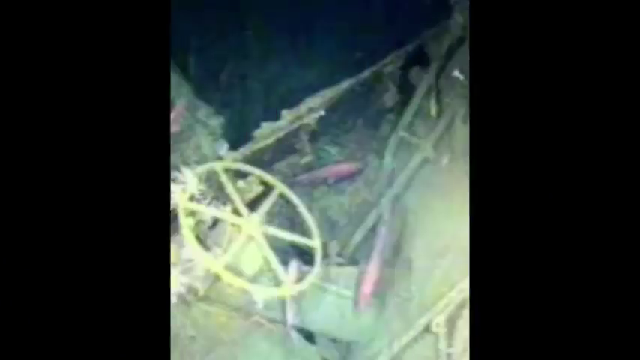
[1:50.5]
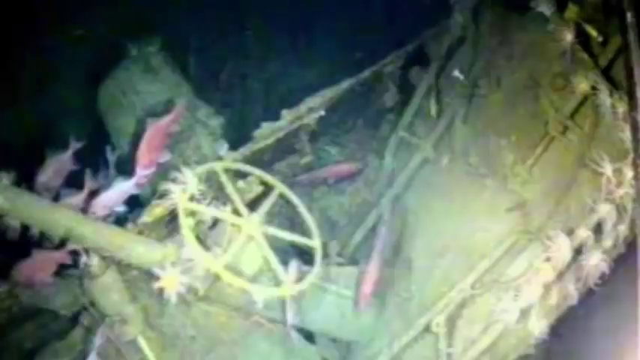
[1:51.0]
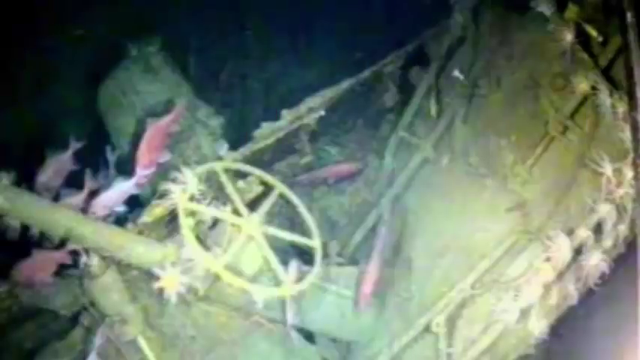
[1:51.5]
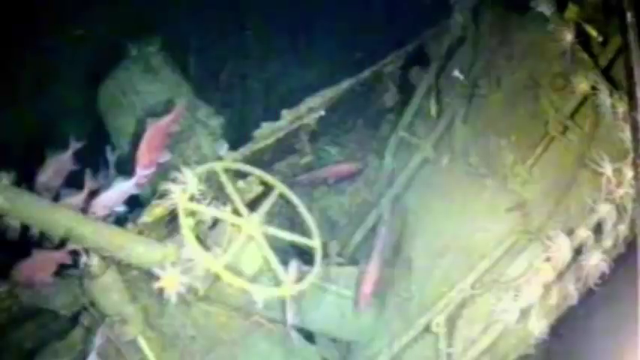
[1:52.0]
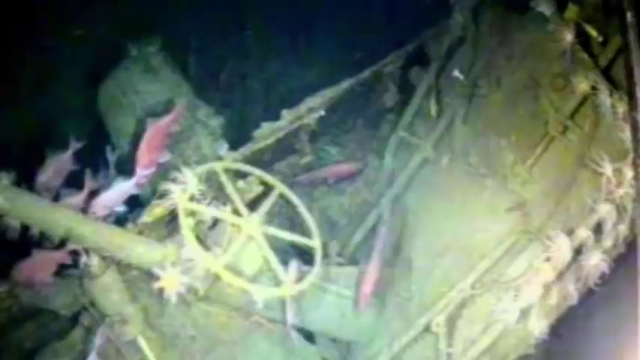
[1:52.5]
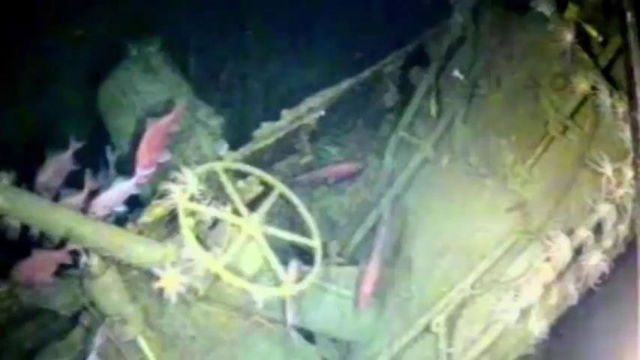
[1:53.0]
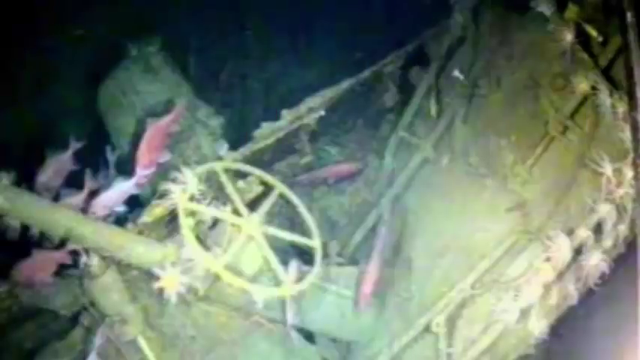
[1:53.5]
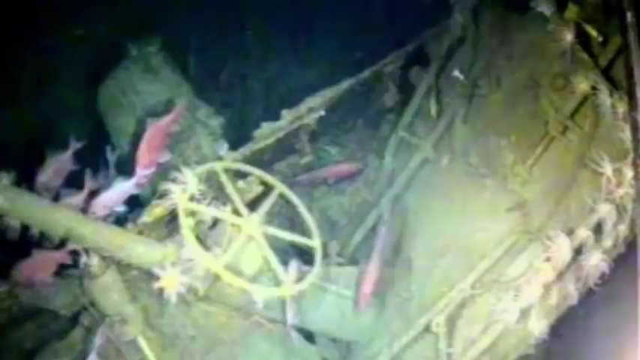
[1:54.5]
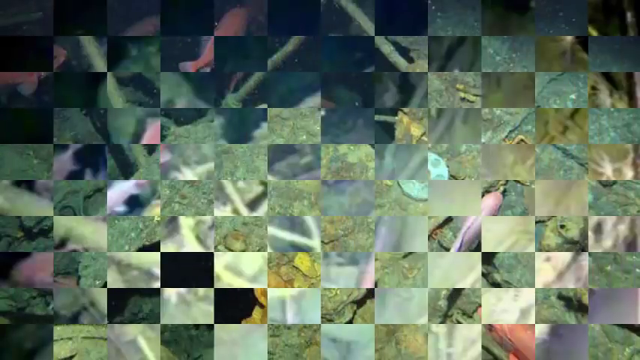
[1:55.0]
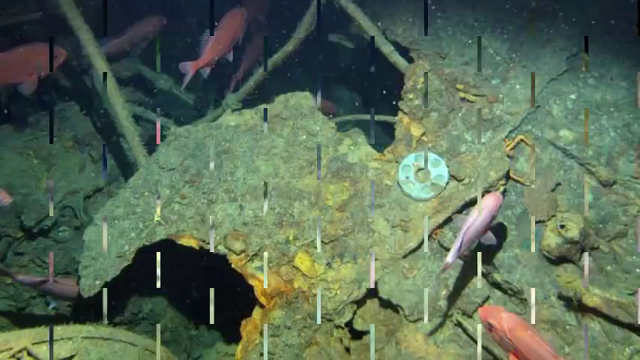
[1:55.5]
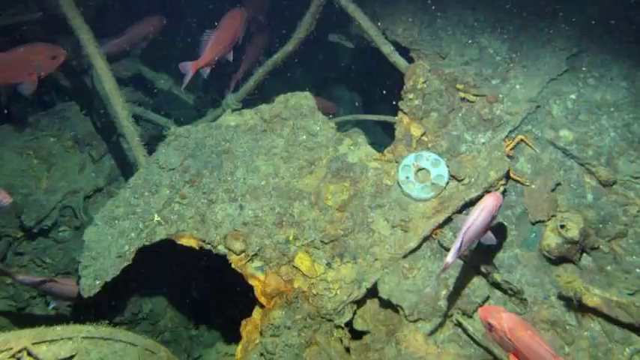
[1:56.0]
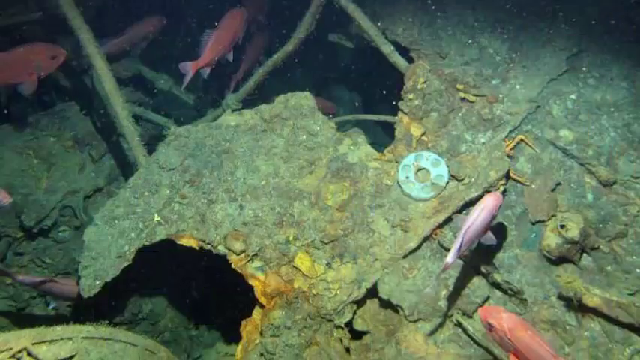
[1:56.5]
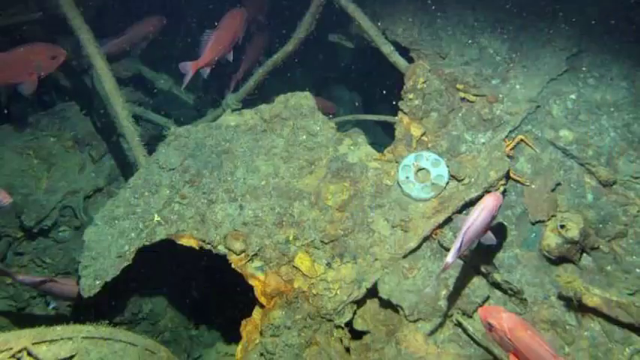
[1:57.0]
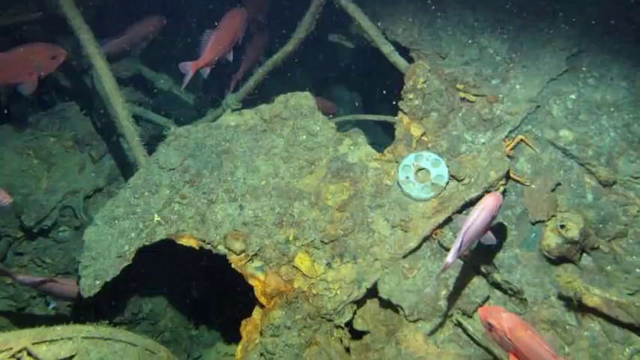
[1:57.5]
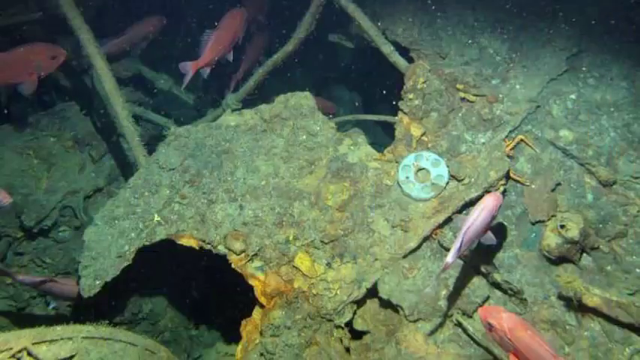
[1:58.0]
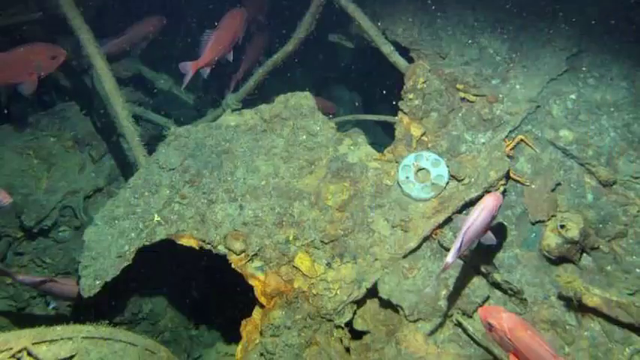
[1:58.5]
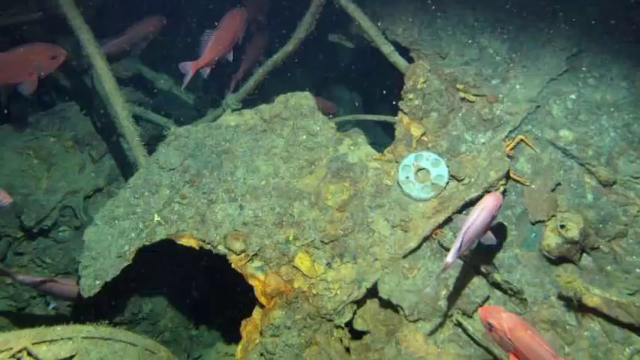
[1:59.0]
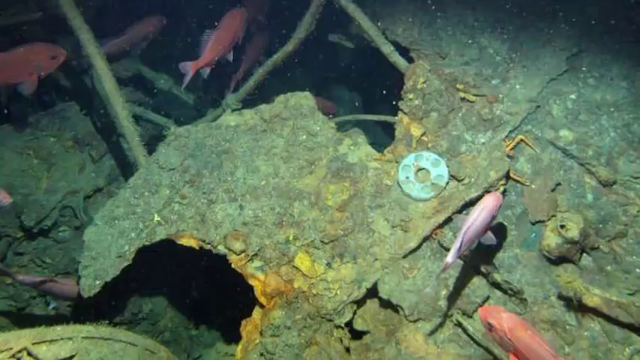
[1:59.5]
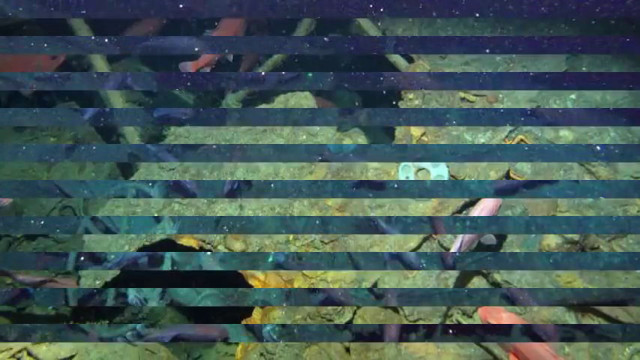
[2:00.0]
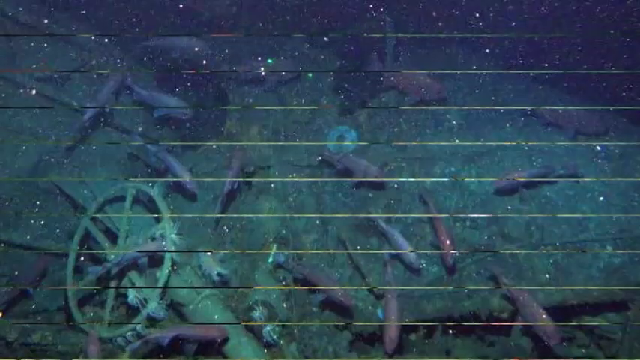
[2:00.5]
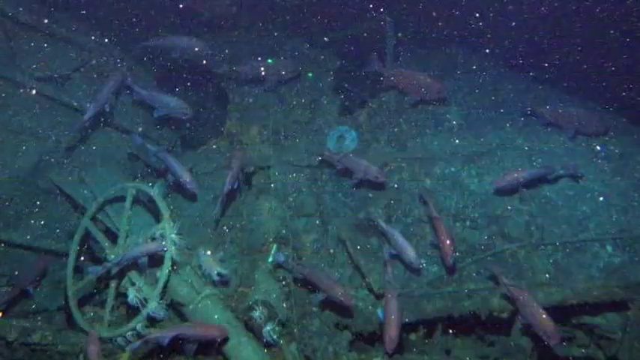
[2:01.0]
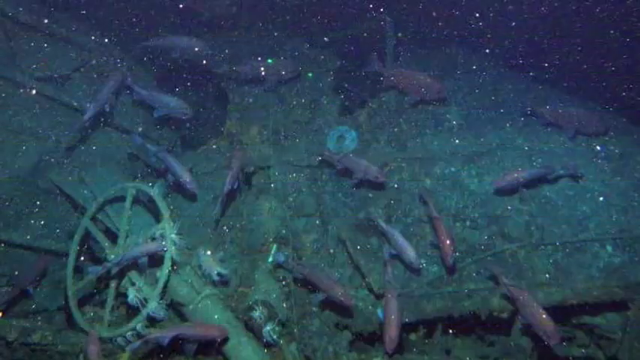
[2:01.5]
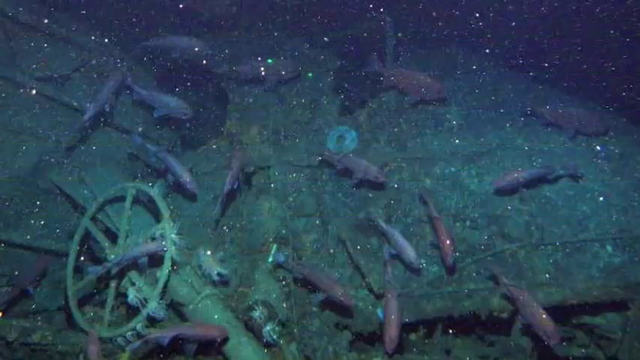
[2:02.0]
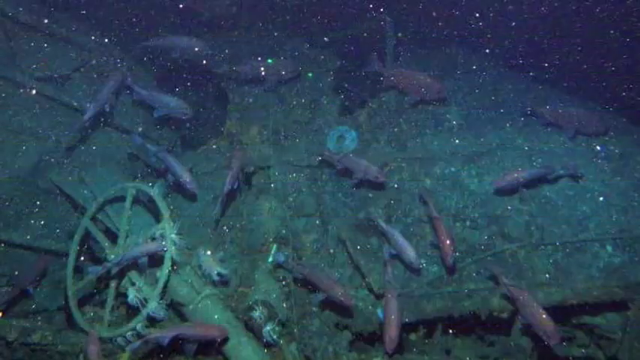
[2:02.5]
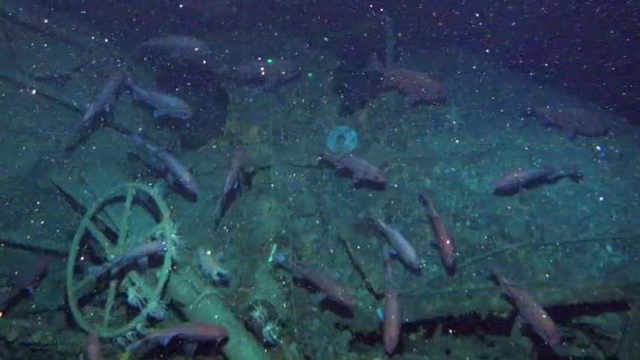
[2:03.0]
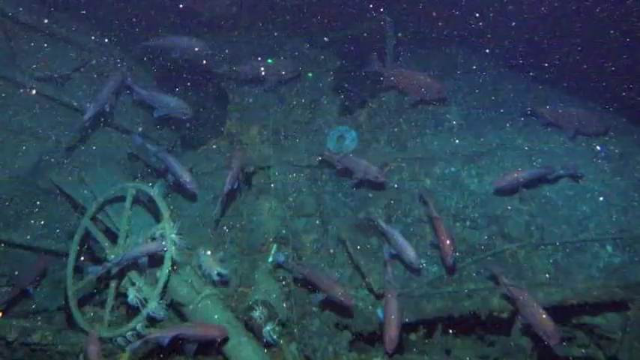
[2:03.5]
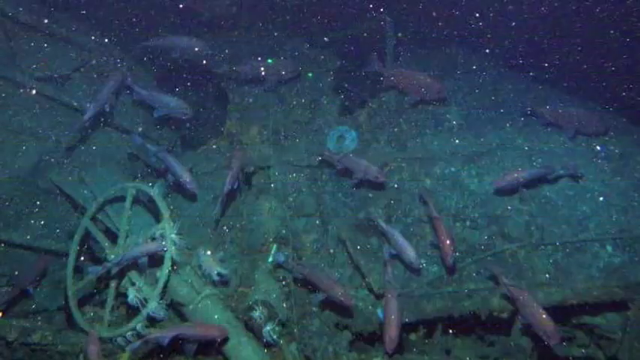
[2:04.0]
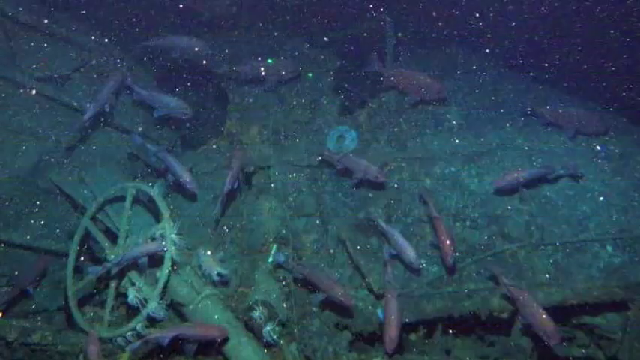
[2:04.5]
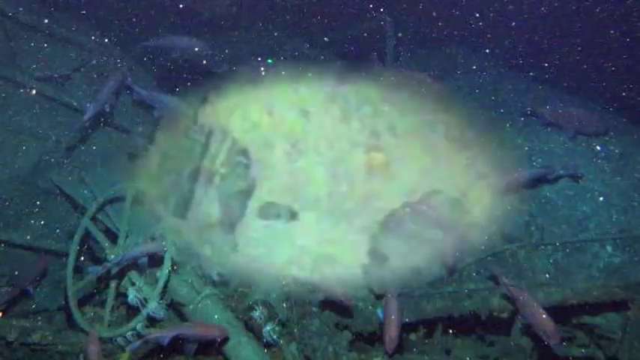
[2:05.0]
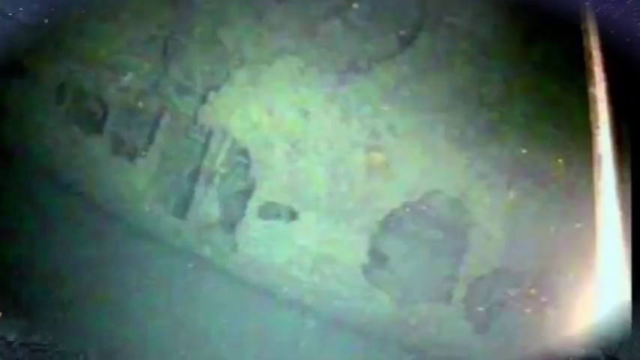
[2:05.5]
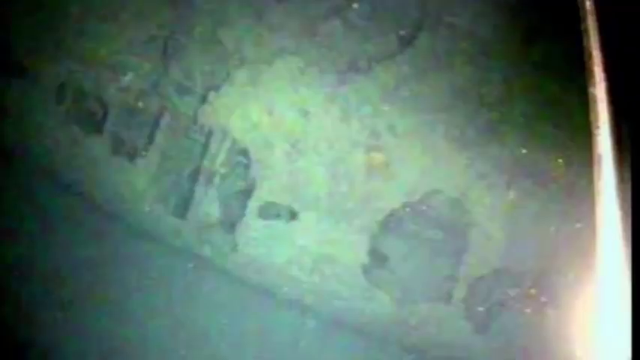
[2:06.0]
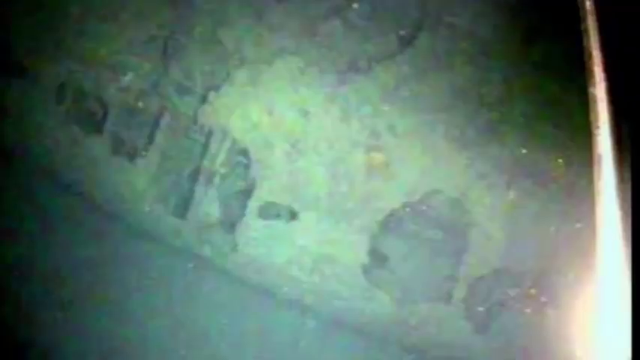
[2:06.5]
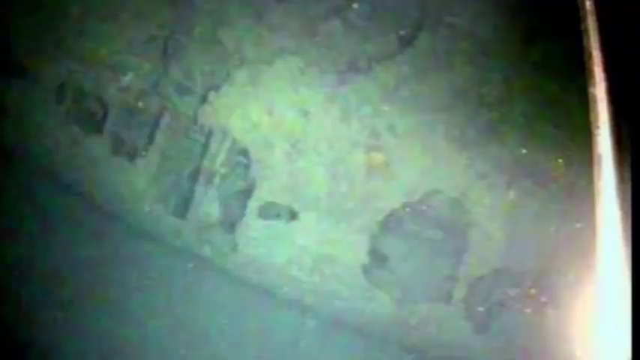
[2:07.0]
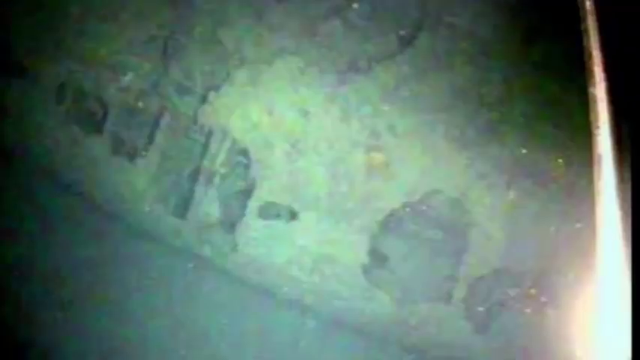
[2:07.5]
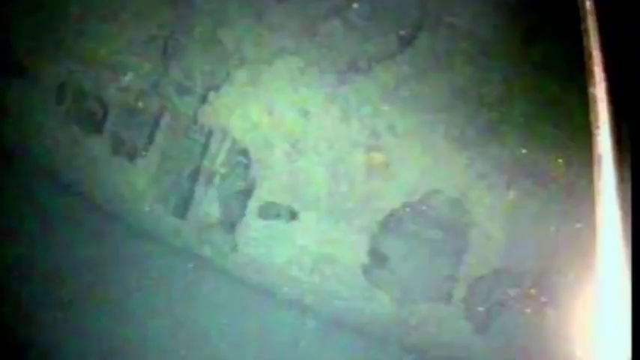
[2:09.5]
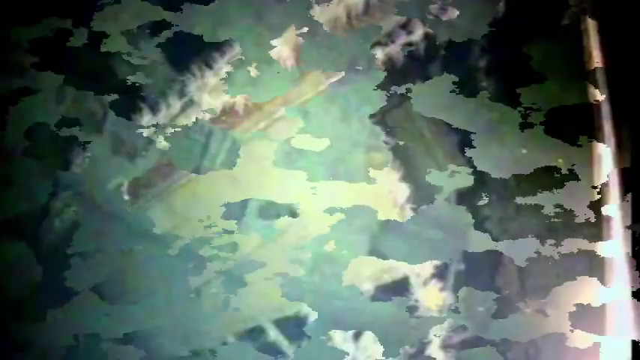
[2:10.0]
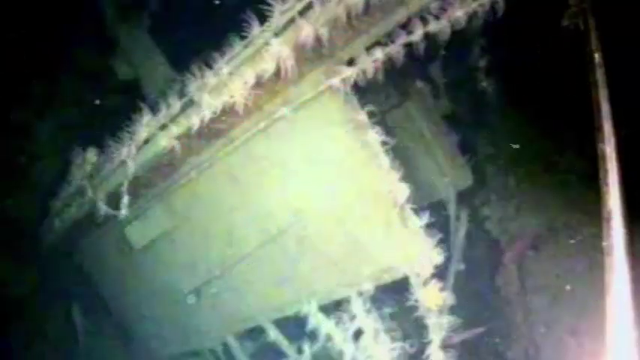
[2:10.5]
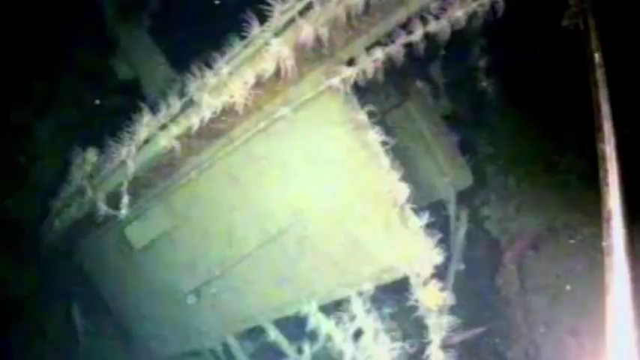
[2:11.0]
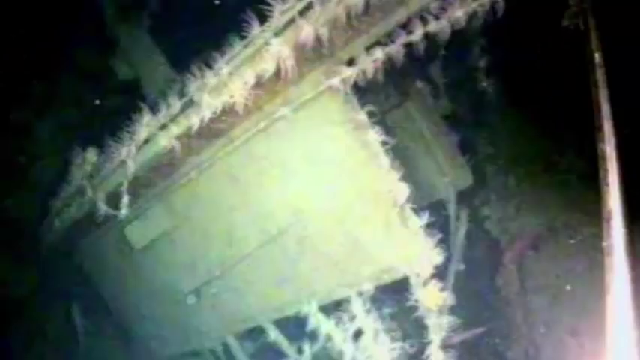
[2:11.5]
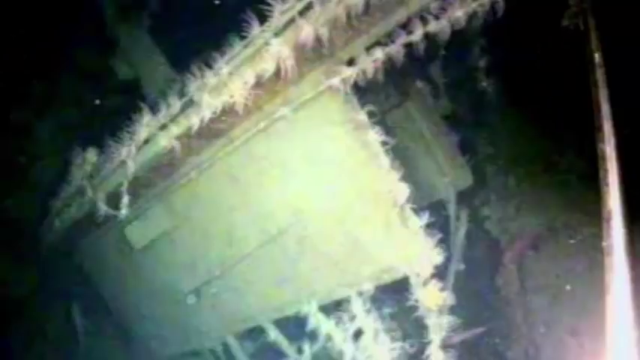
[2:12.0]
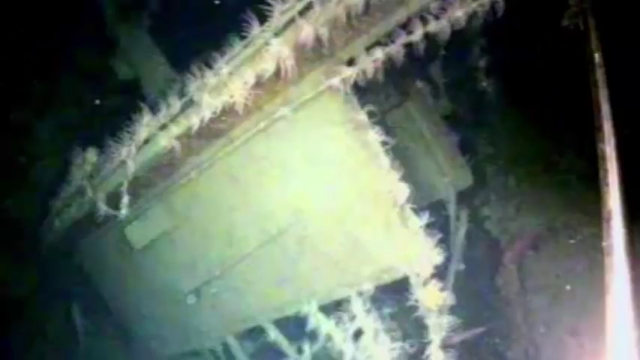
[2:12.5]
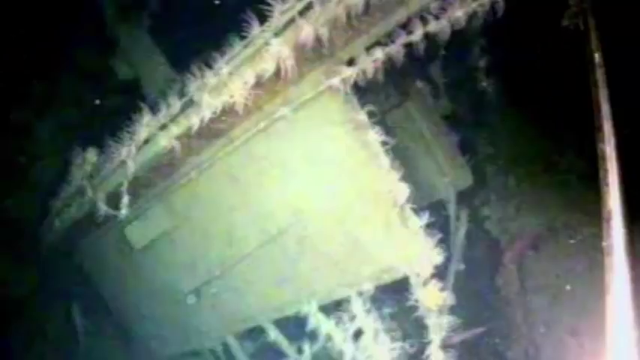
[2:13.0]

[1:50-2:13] Black borders open up to show the same top-down image of the center of the boat, where the steering wheel is visible with its six-shaped and circular design, and a vertical support pole to the left of the wheel exits the screen at the left center border. More images cycle through, with the same black background and a green-tinted, slightly yellow handheld illumination in the center, indicating underwater lighting. The images of the wreckage continue to cycle in succession, showing the same rocky growths or barnacles and the white spider-like organisms covering the length of the metal poles, creating a feather-like texture. No text or overlaid images accompany the pictures, and various animated transitions move from picture to picture. The image with the light source in the bottom right is blurrier than the rest. The video ends abruptly on the image of the metal poles running from left center to top center.